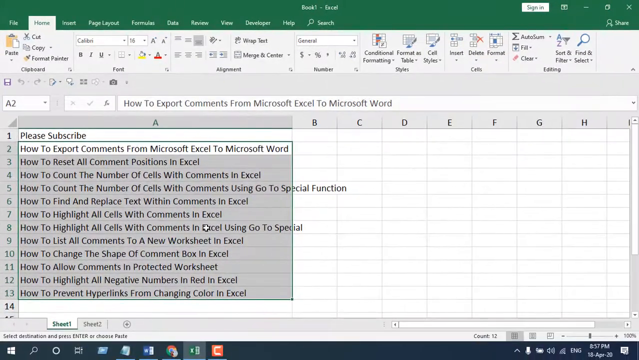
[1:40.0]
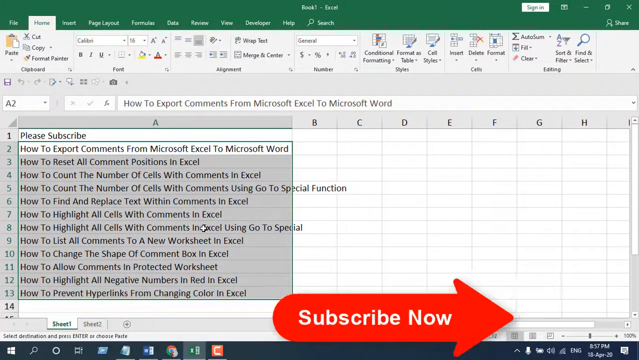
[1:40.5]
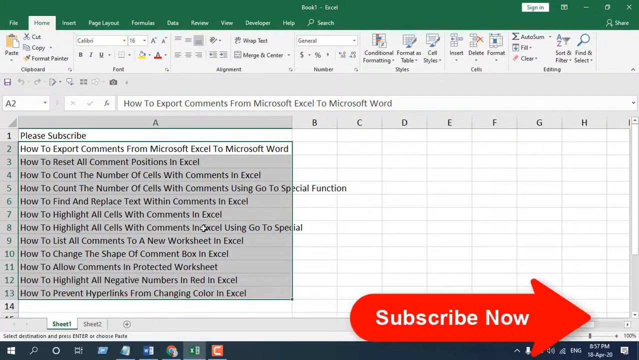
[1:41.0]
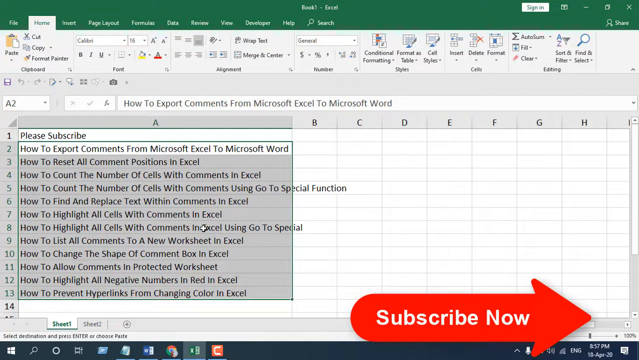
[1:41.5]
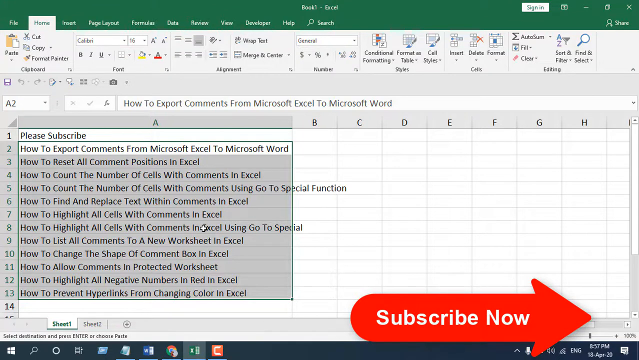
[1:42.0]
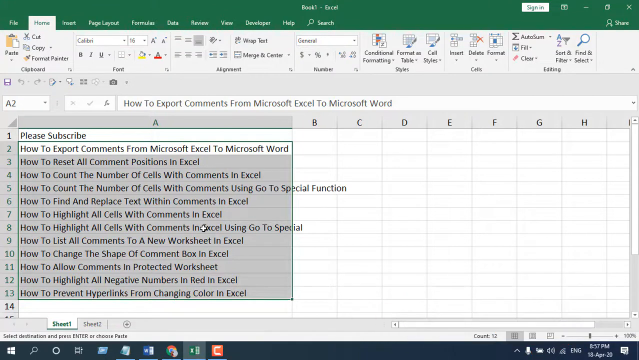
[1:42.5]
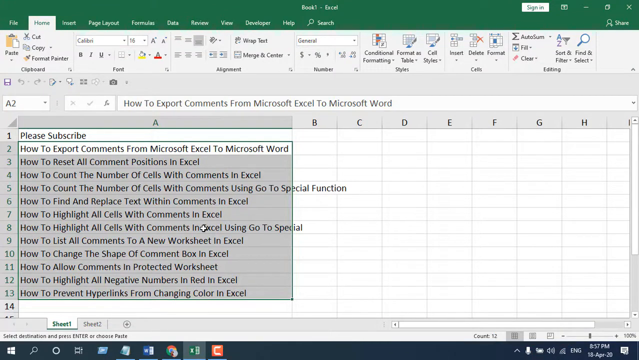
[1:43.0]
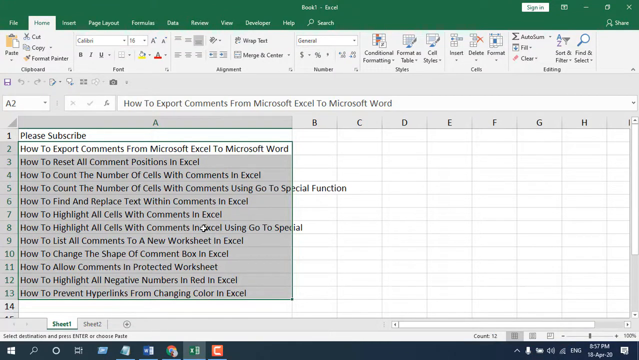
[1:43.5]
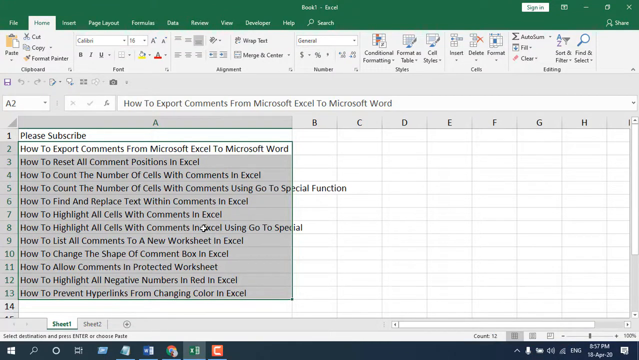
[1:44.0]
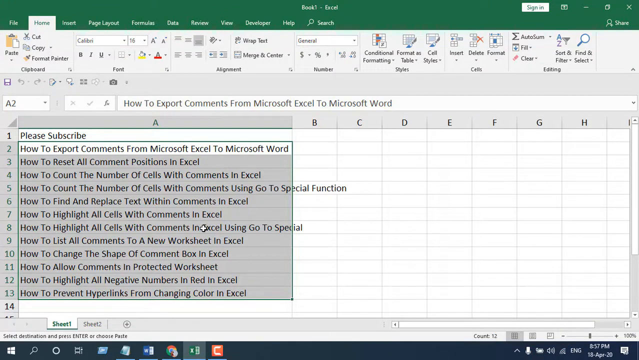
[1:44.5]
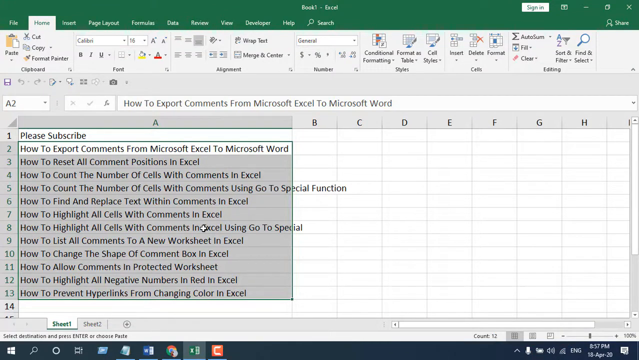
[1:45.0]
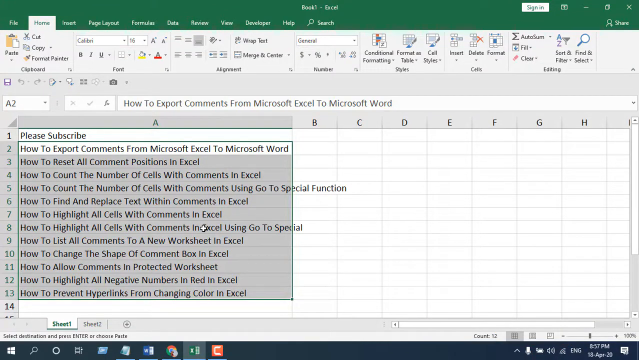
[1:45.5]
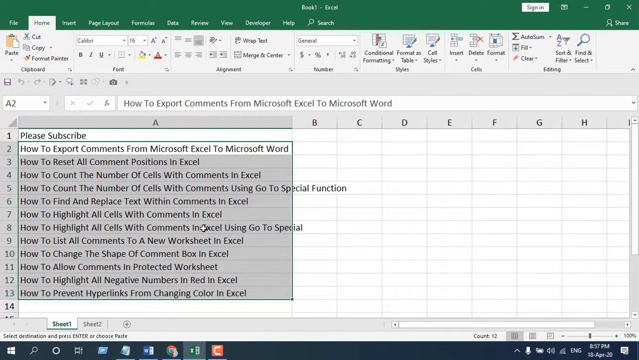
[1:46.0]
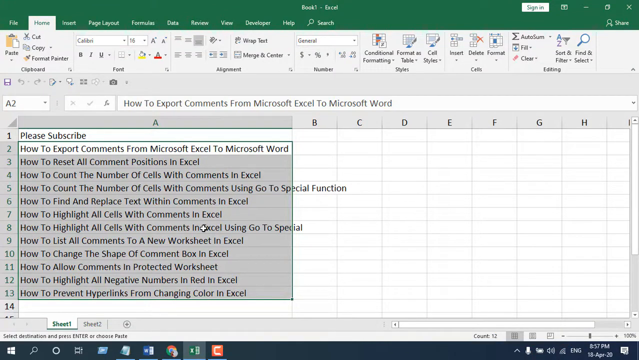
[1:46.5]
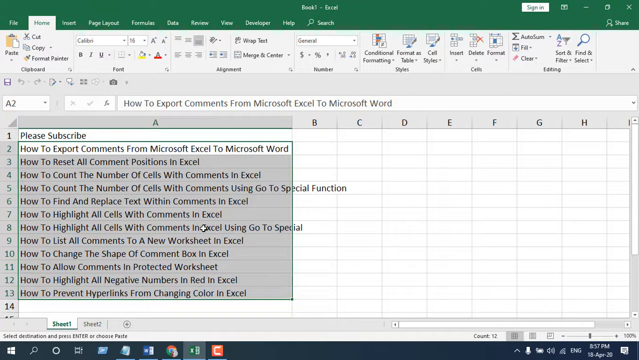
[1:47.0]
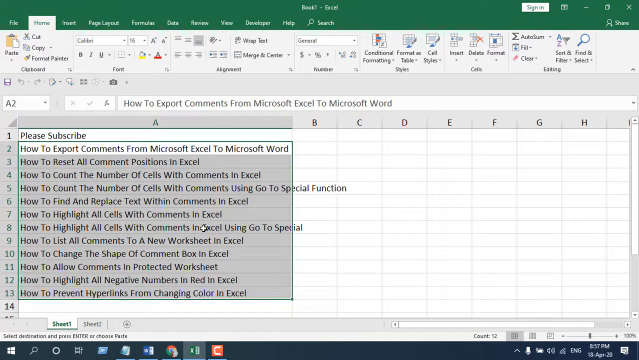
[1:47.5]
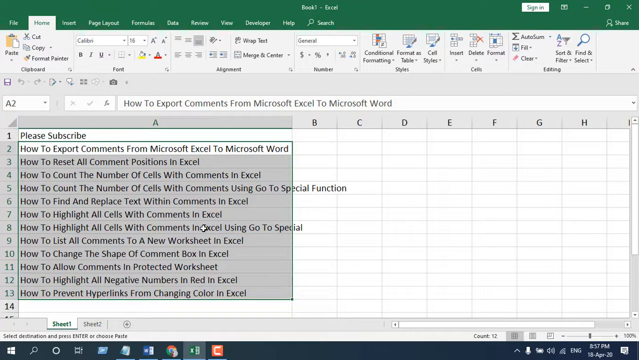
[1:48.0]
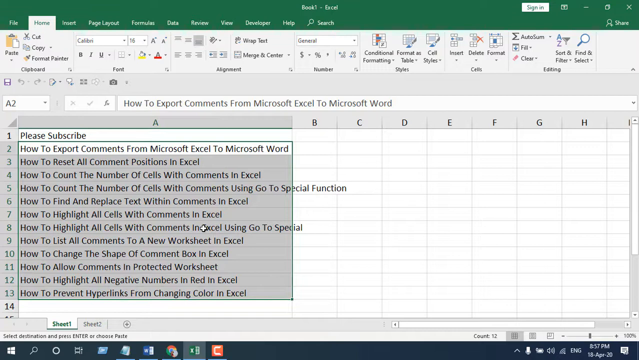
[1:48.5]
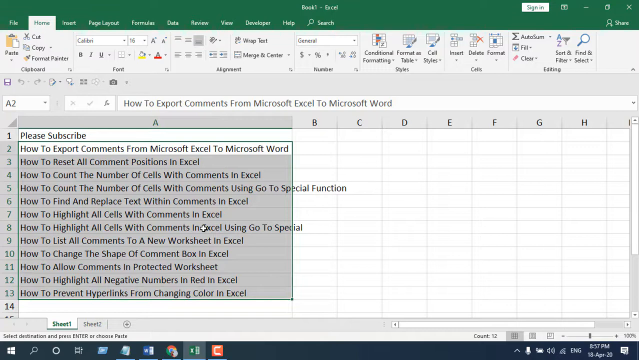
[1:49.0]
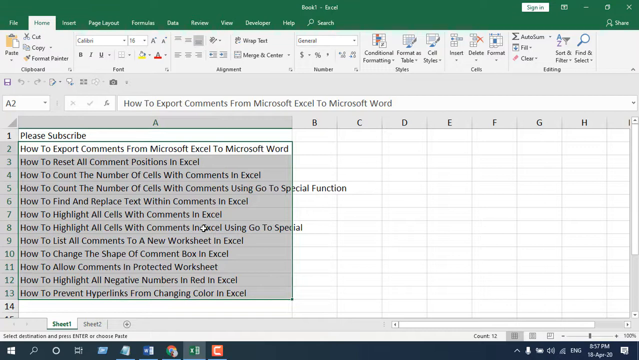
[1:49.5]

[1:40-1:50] Although the whole range looks highlighted, cells A1 and A2 are white. A1 has a border only along its top, and there is a box around A2 through A13. A2 has a white background, while the cells down through A13 are light gray. The red "Subscribe Now" oval with an arrow pointing right drops down, with the first letter of each word capitalized and the text in white. It stays for a second, then zooms off quickly to the right. At the bottom left, next to the green "Sheet 1" tab, text reads "Select destinations and press enter or choose paste".